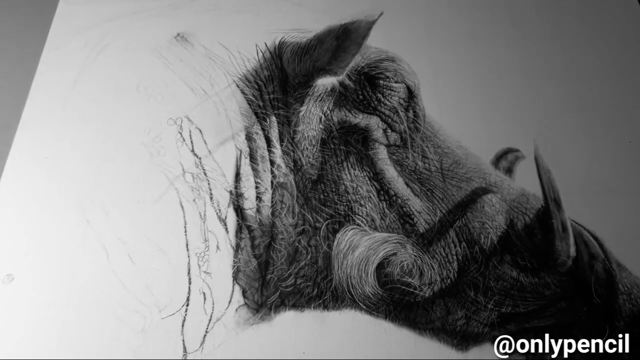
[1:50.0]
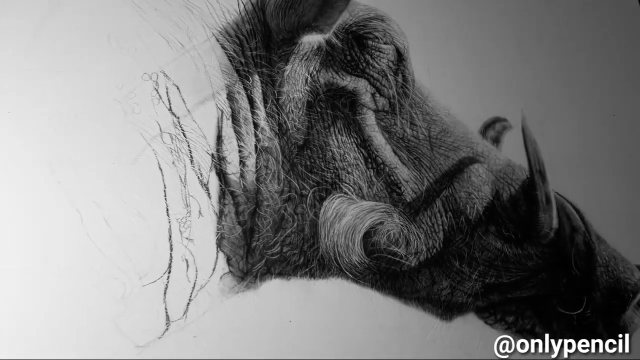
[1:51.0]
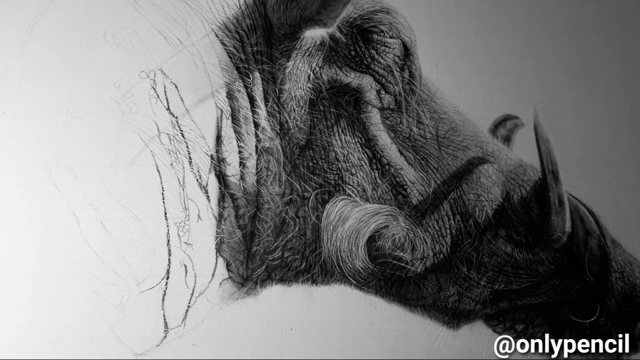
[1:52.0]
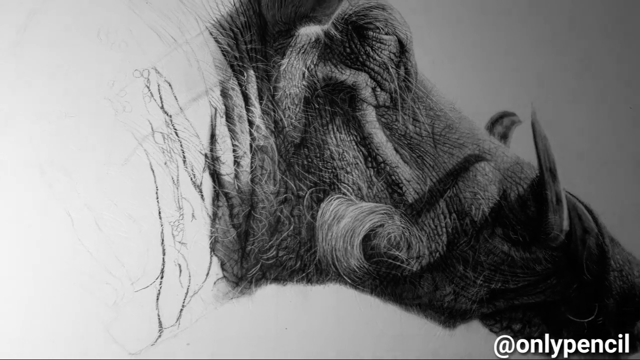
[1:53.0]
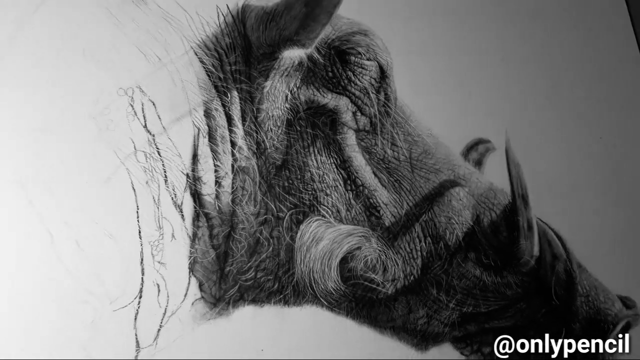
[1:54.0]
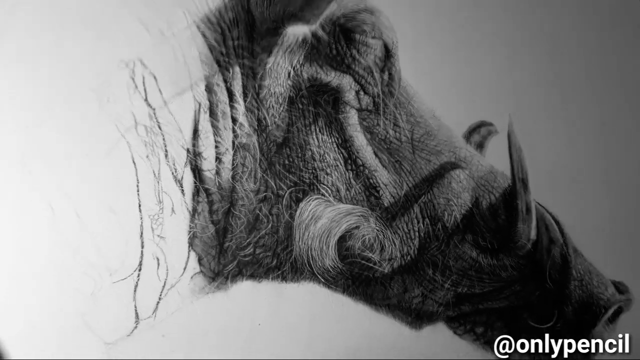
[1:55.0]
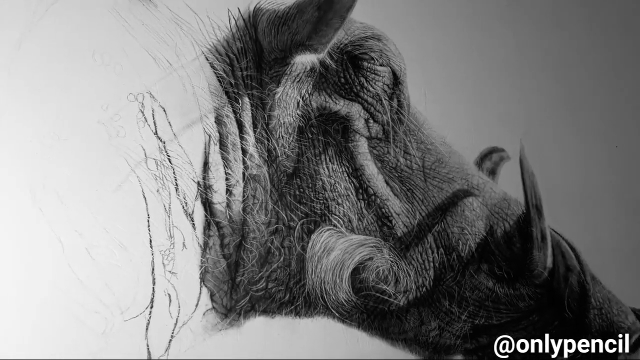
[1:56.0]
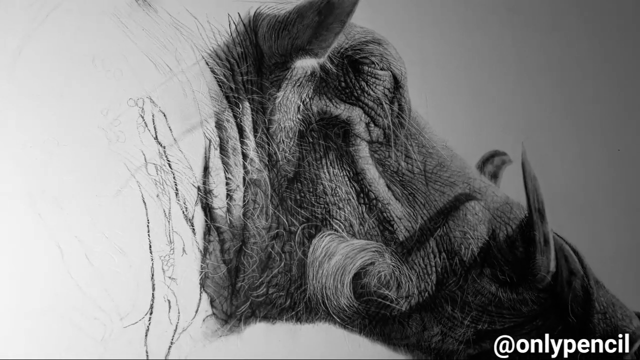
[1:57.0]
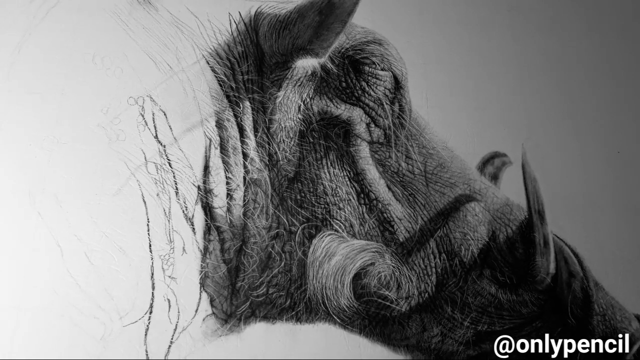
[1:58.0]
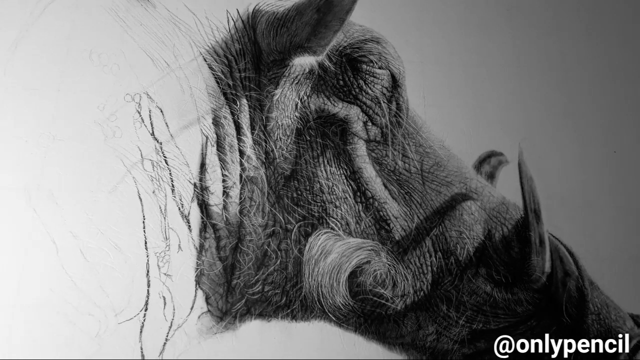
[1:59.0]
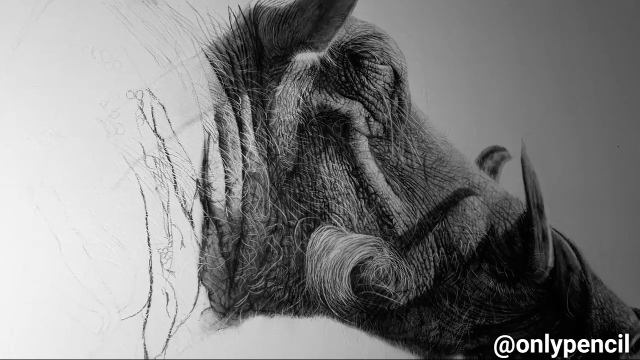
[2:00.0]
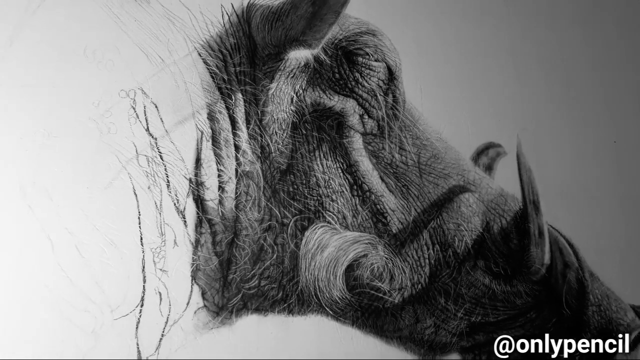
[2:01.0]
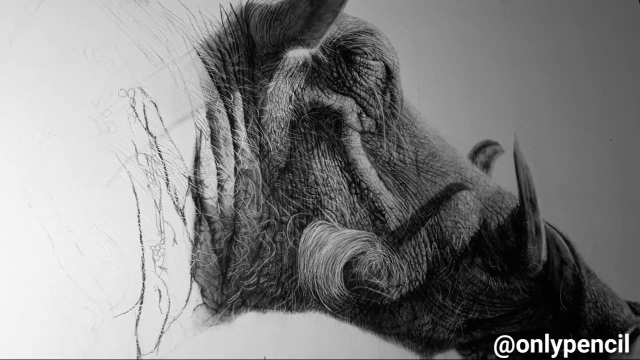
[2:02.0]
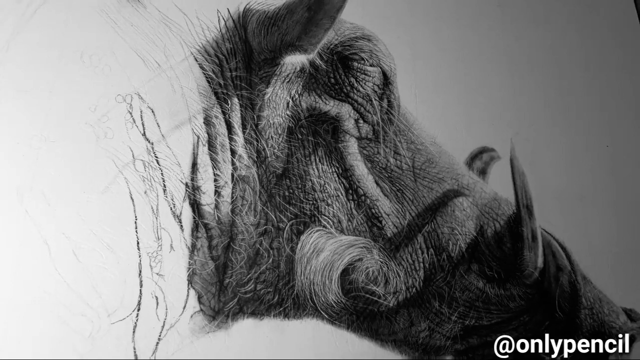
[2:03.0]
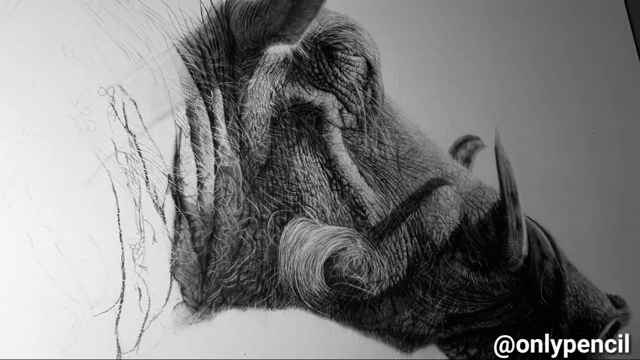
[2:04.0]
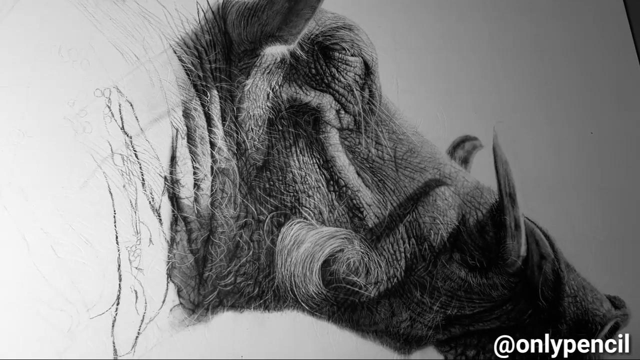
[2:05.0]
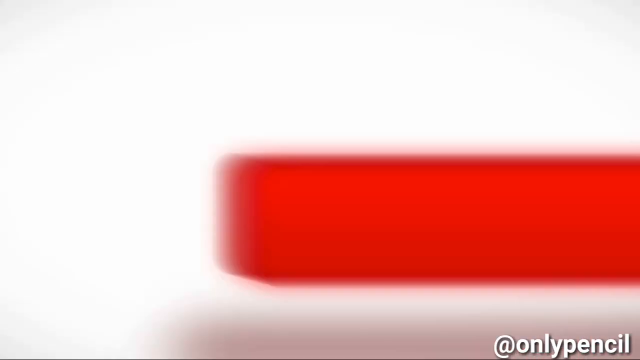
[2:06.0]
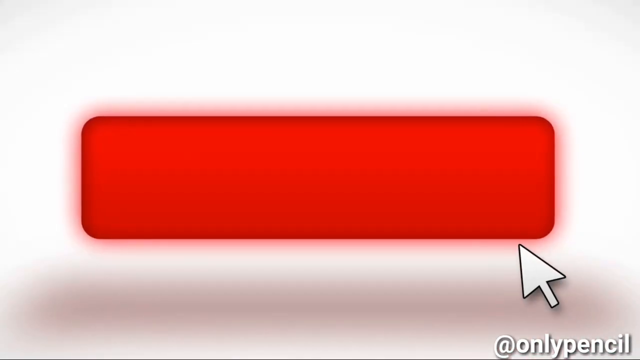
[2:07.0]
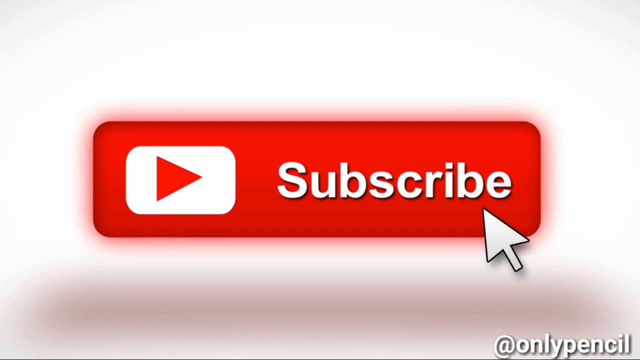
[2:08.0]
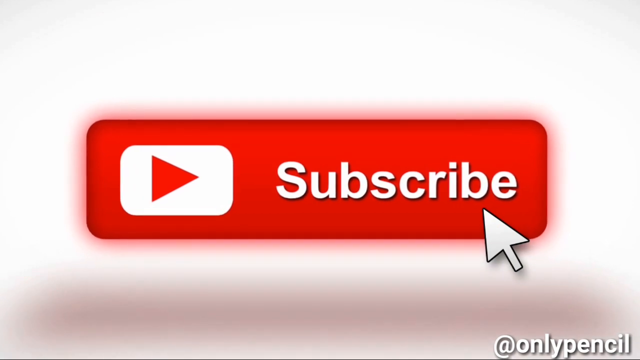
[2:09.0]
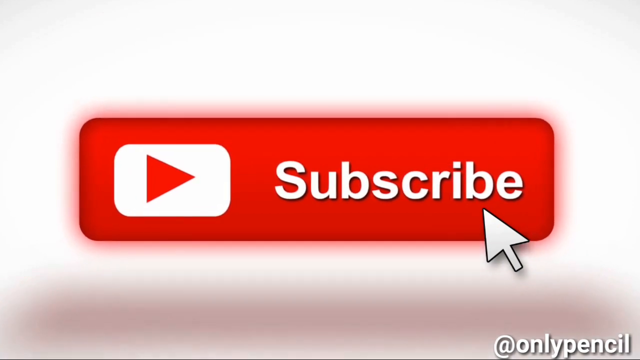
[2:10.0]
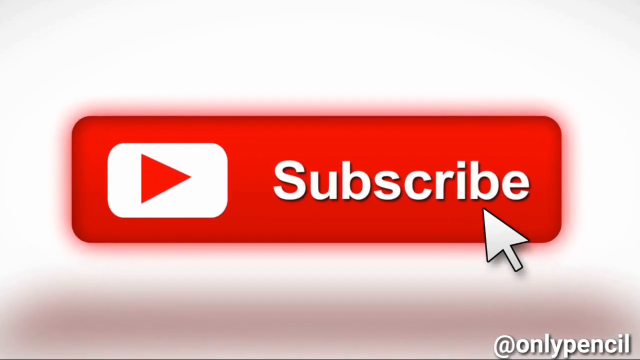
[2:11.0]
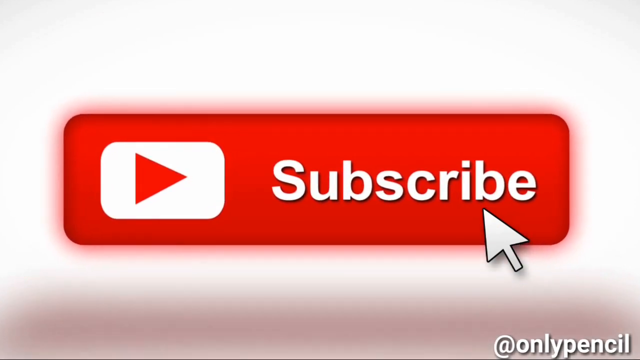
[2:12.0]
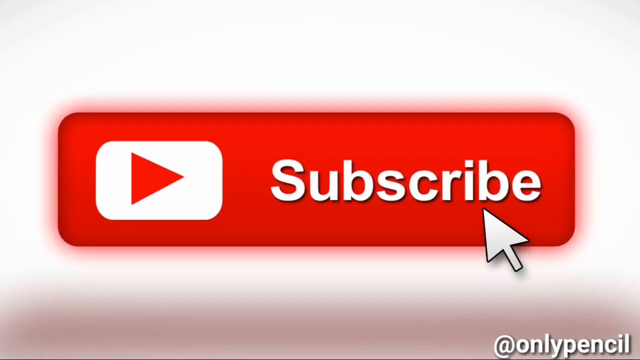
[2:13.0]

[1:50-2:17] The camera stays on the head of the warthog, moving a little while nothing else happens, and a bit of the tip of the nose is visible. A wipe from the bottom right corner then brings in a white background. A red rectangle comes up; on its left side is a white square with the red YouTube play button, and to its right, in big bold white lettering, it says "subscribe". An arrow comes up from the bottom right corner and hovers just below the B and E in "subscribe"; it is big, bold and white with a black border. The red button moves slightly toward the camera, growing bigger, so the arrow ends up a bit farther left on the letters. There is a slight red haze around the top, right side, bottom and left side of the button. The white background still has "only pencil" in the bottom right corner. The subscribe button stops moving toward the camera, and the video slowly fades to black.